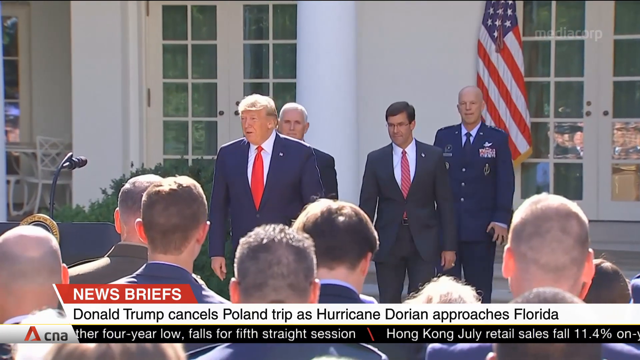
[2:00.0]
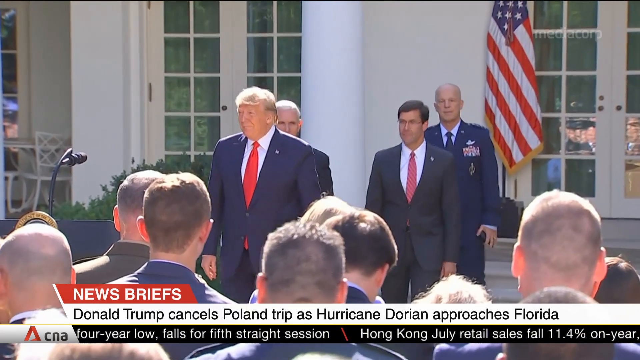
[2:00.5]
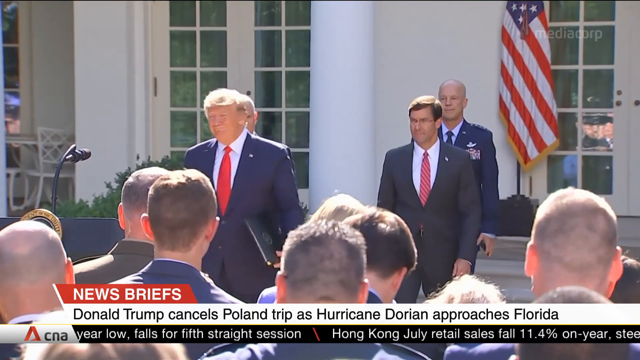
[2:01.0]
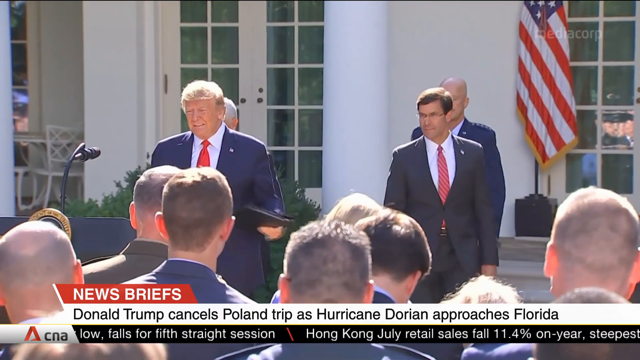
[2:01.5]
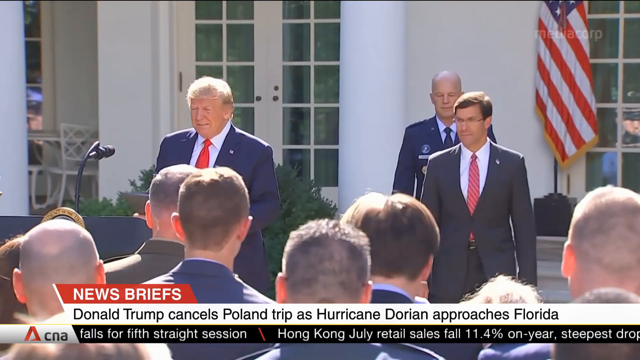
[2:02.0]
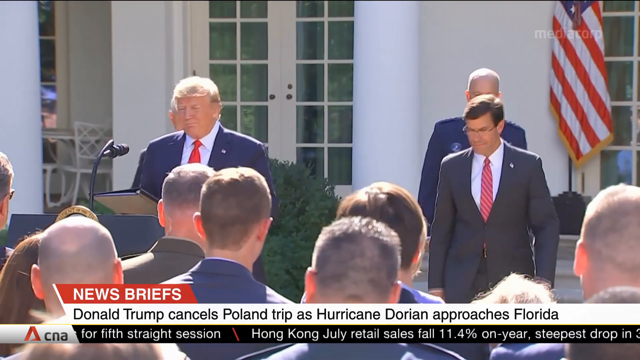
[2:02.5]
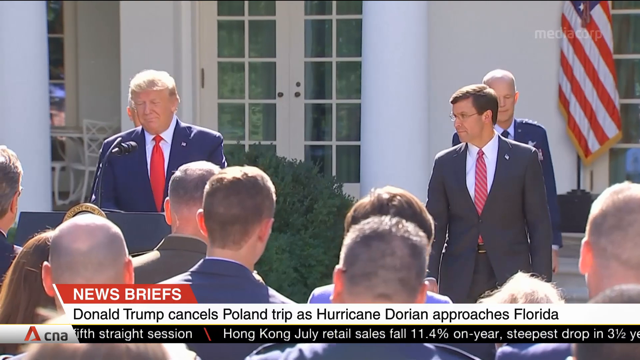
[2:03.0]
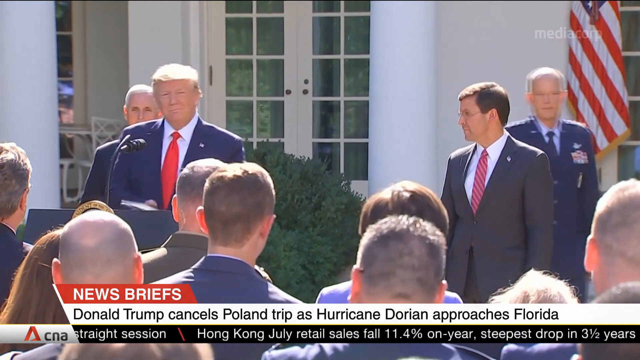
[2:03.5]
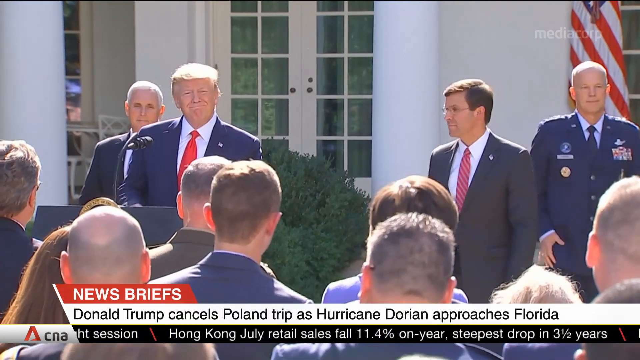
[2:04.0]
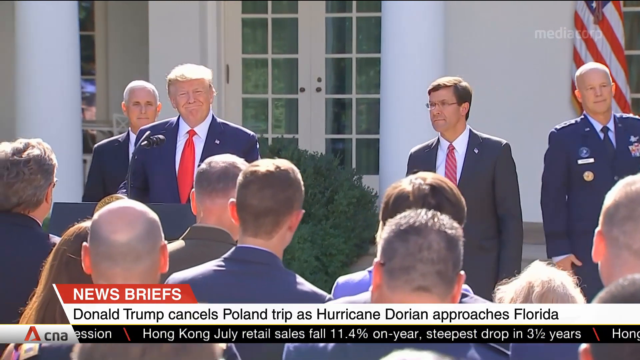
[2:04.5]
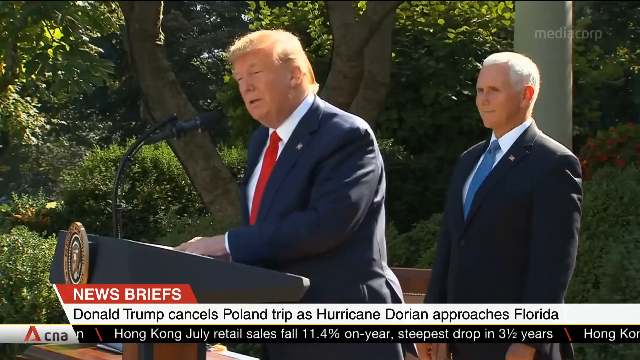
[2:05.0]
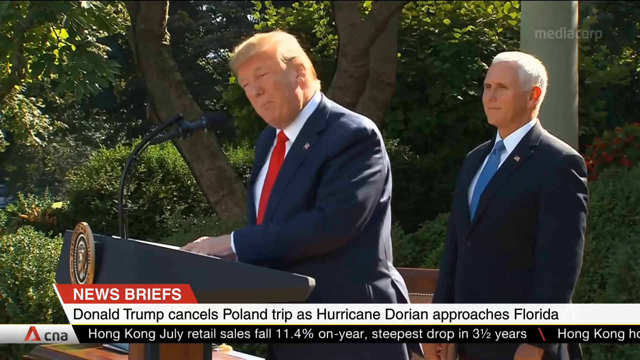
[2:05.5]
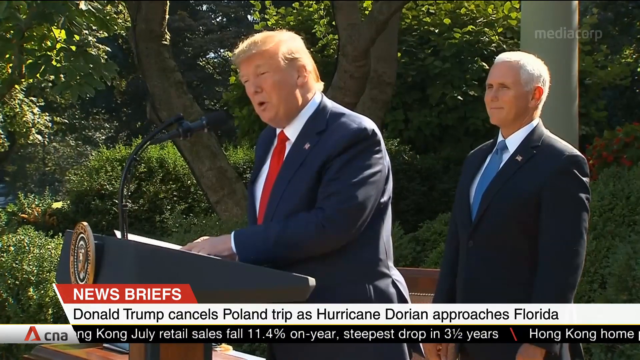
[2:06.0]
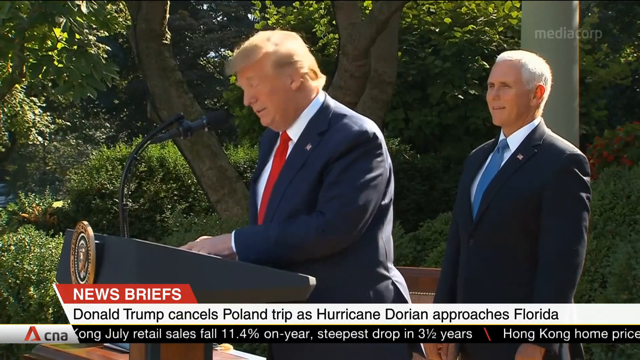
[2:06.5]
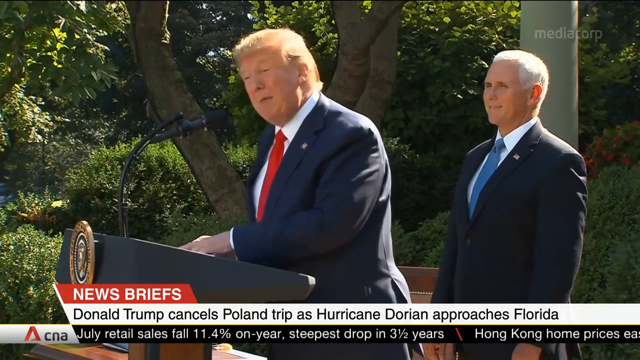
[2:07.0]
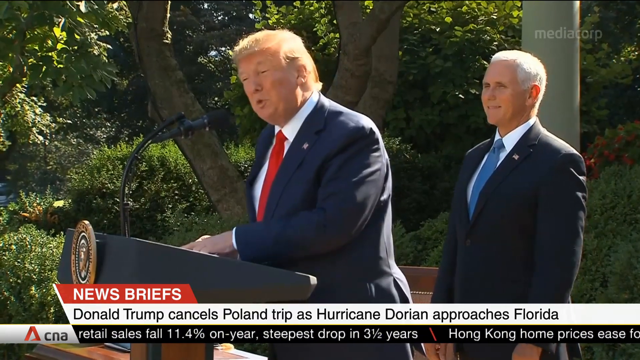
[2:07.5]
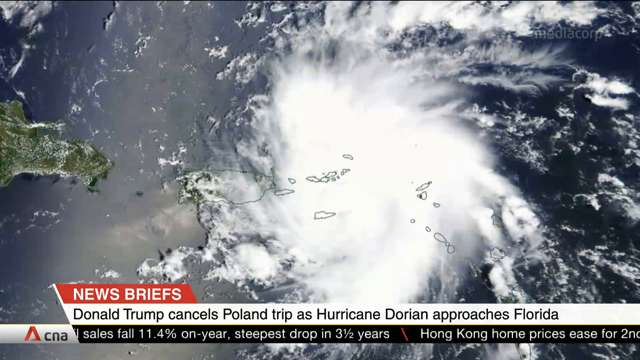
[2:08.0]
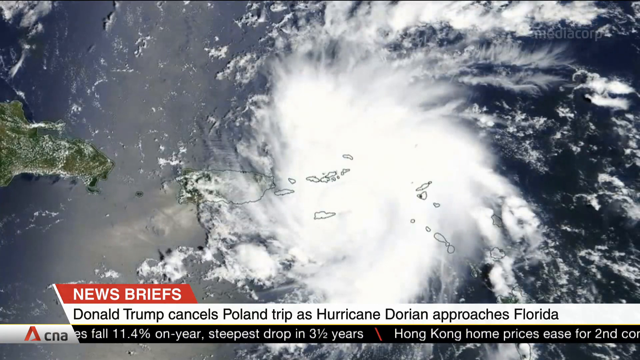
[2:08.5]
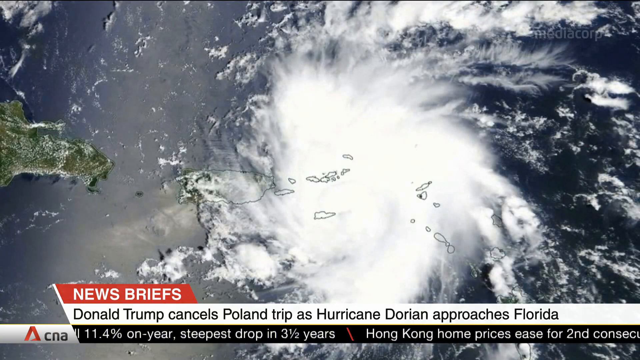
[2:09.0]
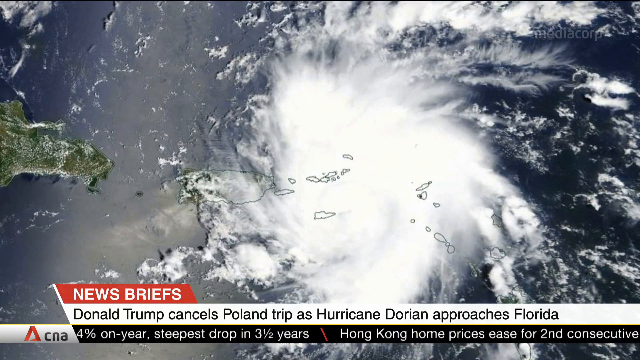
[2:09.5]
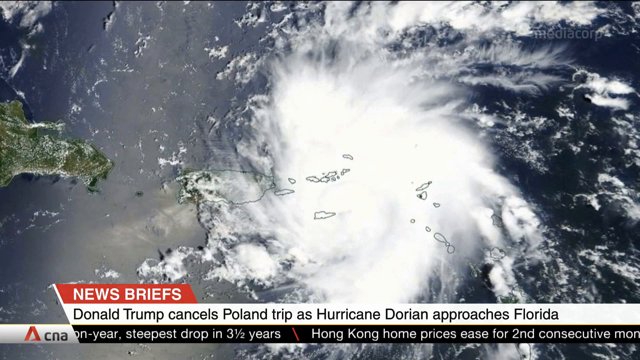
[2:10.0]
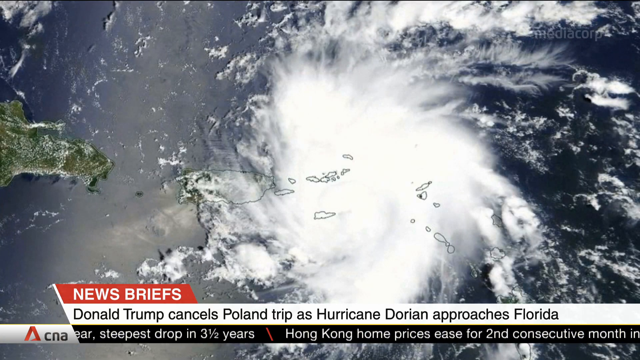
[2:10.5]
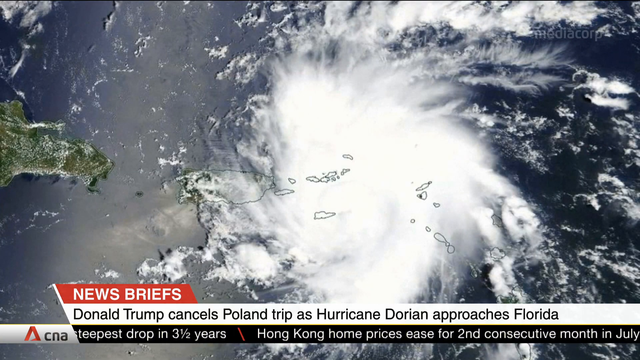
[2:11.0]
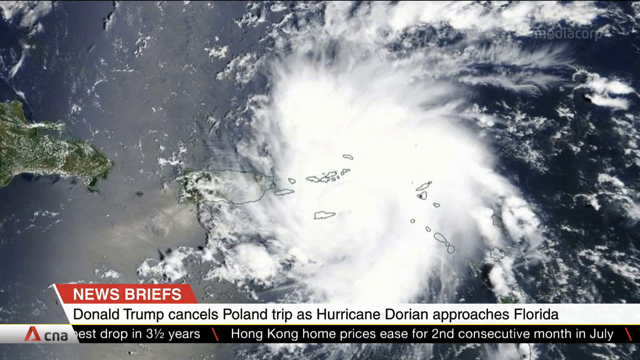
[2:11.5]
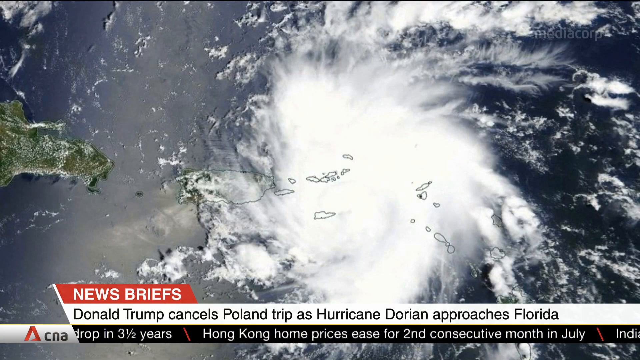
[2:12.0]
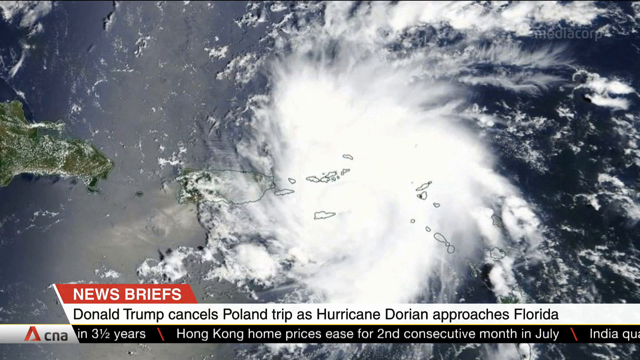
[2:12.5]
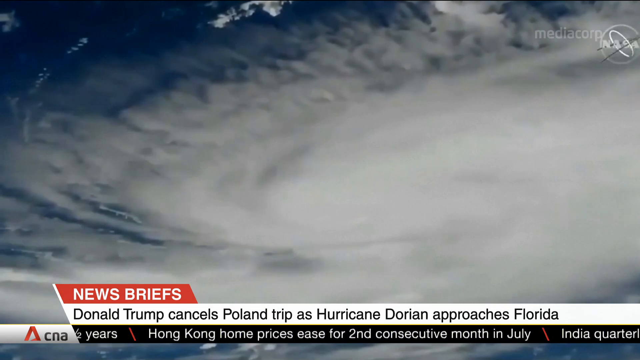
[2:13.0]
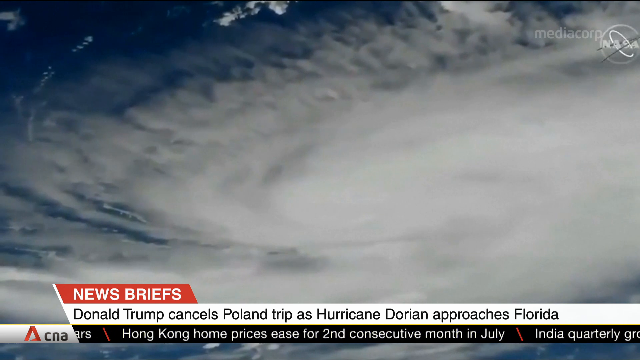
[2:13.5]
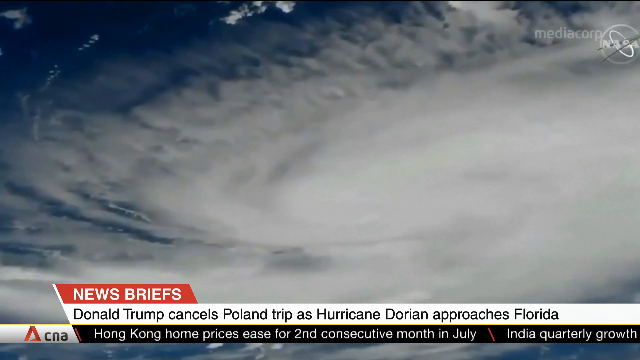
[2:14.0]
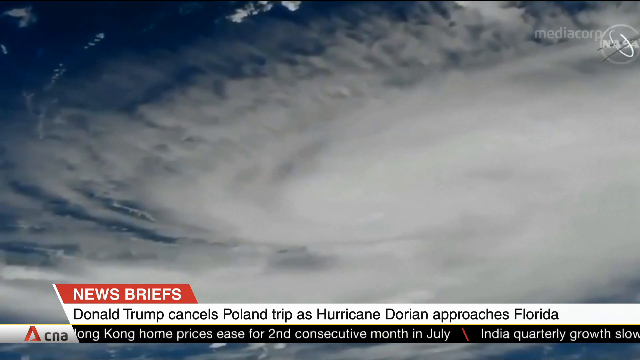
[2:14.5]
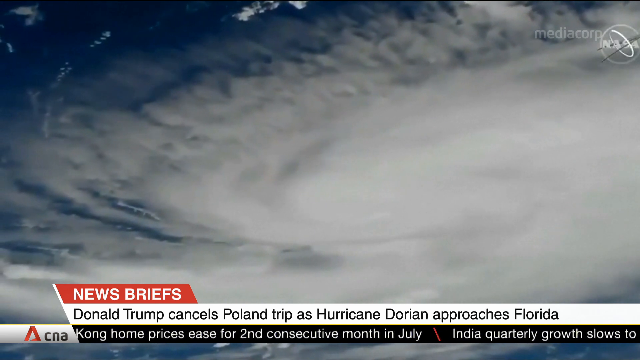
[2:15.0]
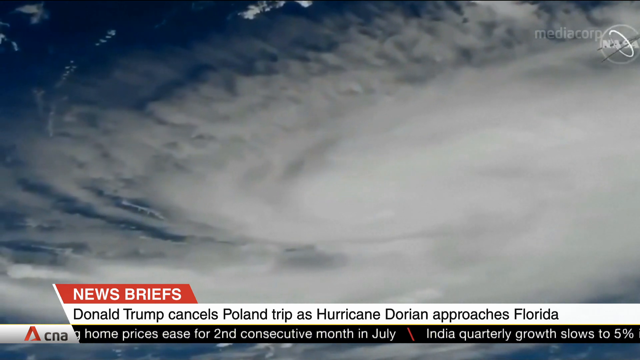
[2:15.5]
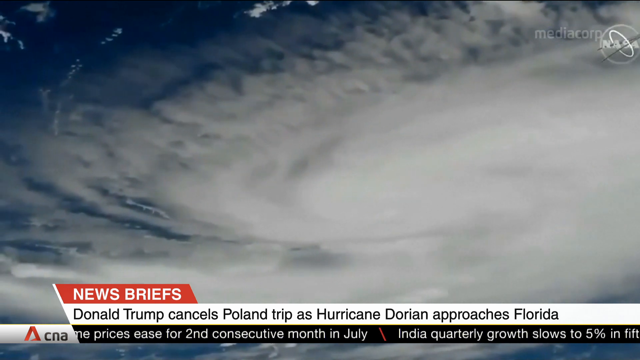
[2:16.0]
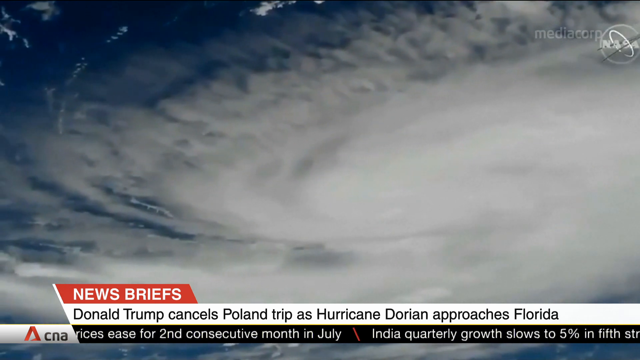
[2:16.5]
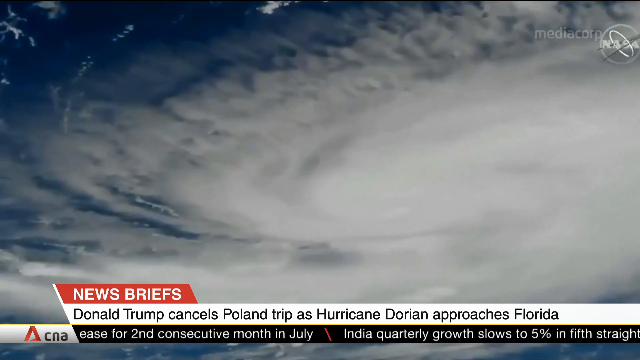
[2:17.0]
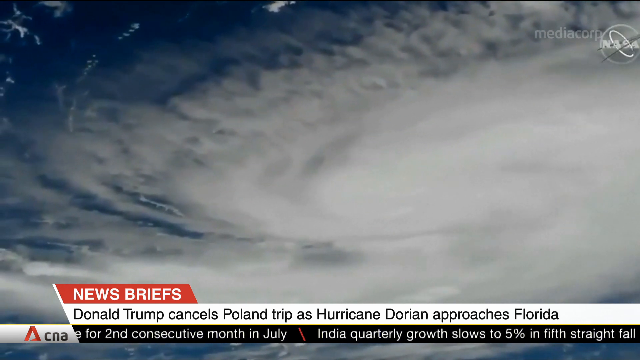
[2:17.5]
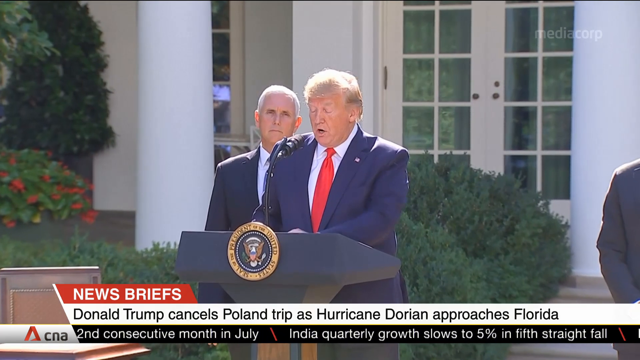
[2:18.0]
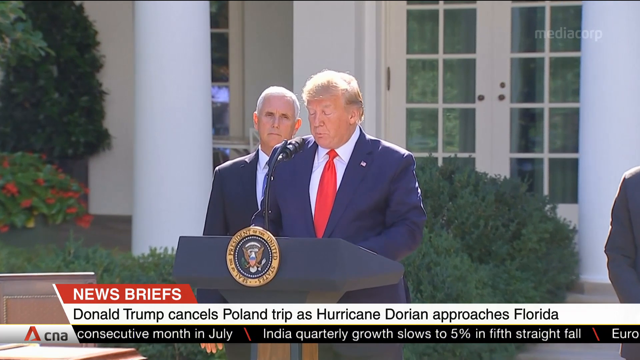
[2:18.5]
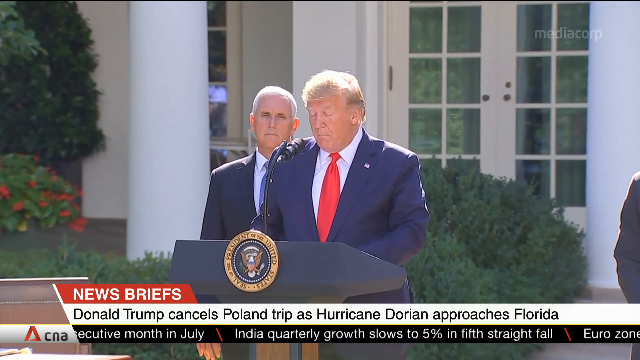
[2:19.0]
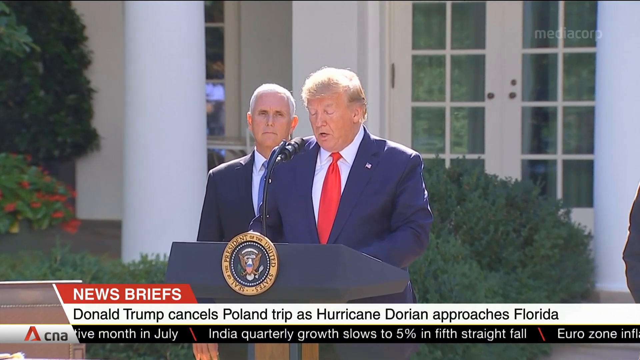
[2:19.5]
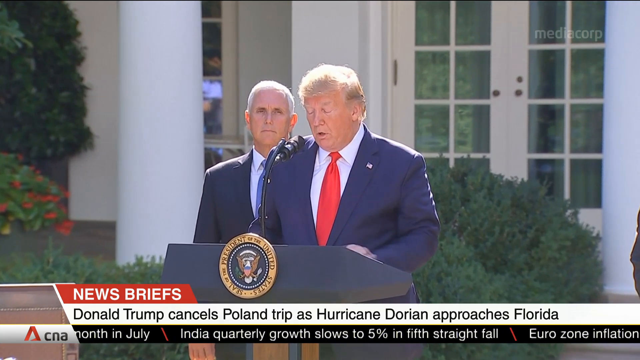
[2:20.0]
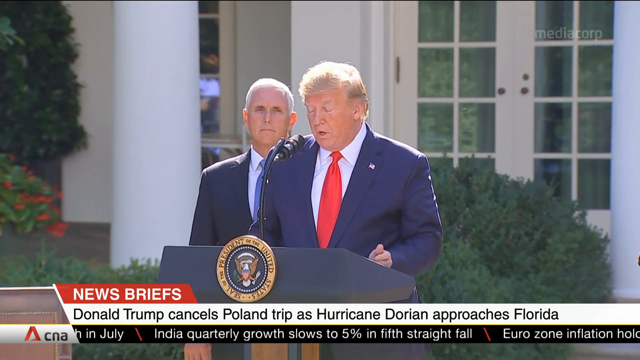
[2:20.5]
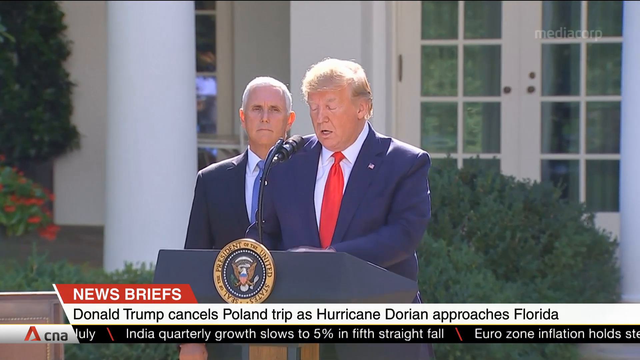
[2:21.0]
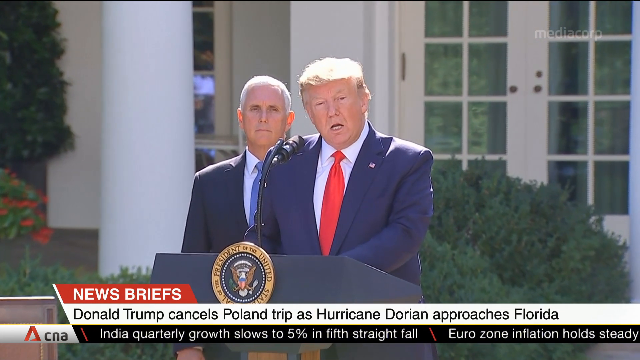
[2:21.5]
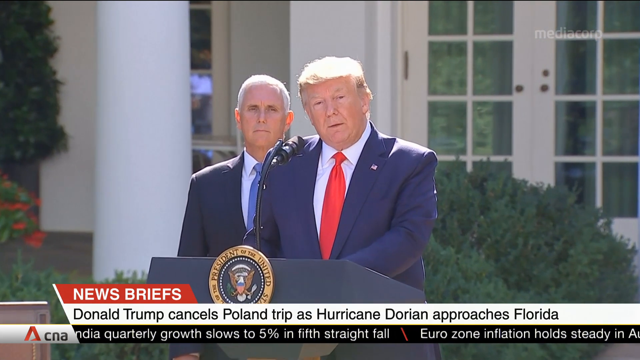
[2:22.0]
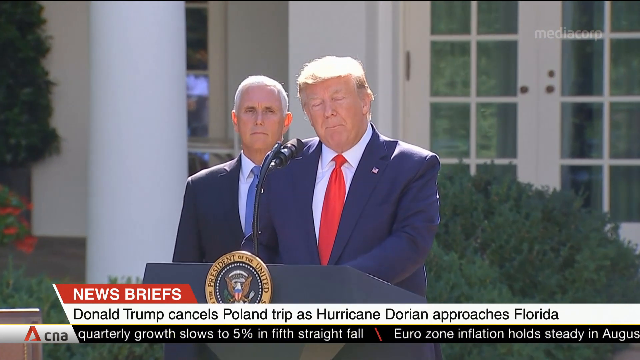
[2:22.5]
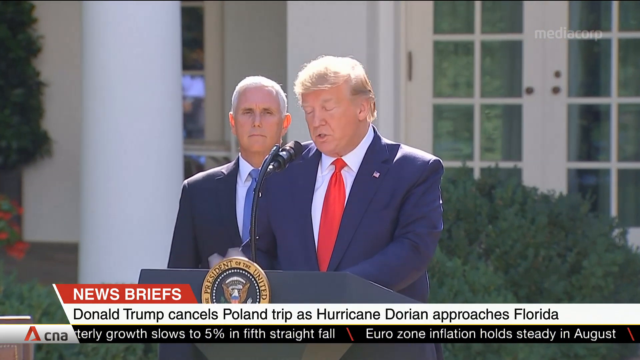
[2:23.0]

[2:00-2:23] Donald Trump continues to walk and is apparently about to give a speech. A visual representation of the hurricane shows its very big, cloudy structure. Trump is then shown making another speech or continuing the speech, standing at a podium at a microphone with a United States emblem on the front of the podium. A folded American flag is behind them. The location is possibly the White House, though this is uncertain, and it seems to be around springtime. All the people are dressed up, wearing vests.